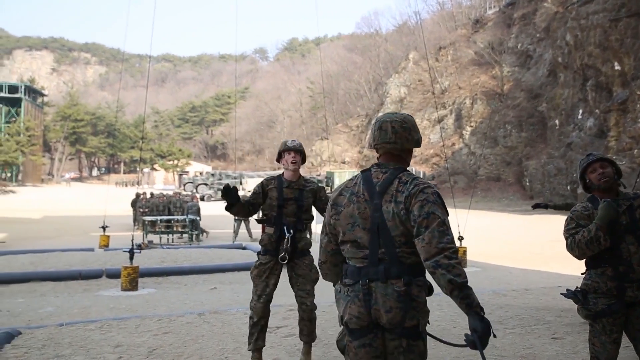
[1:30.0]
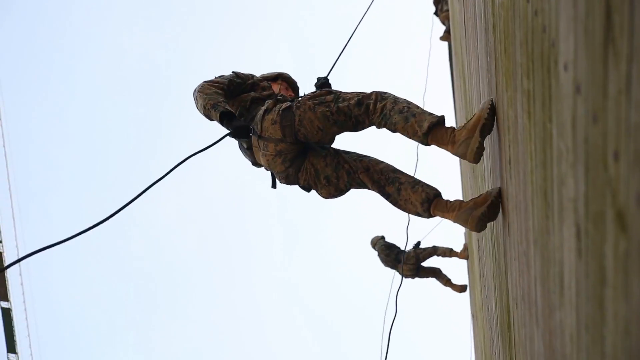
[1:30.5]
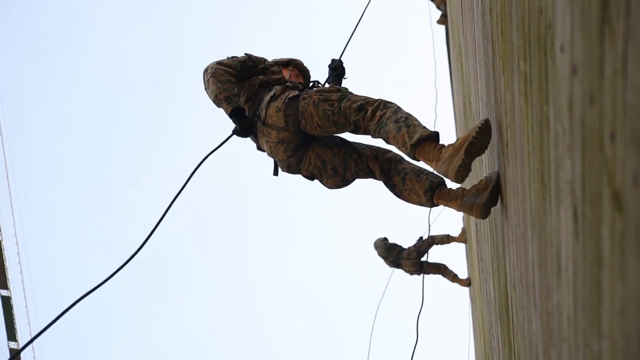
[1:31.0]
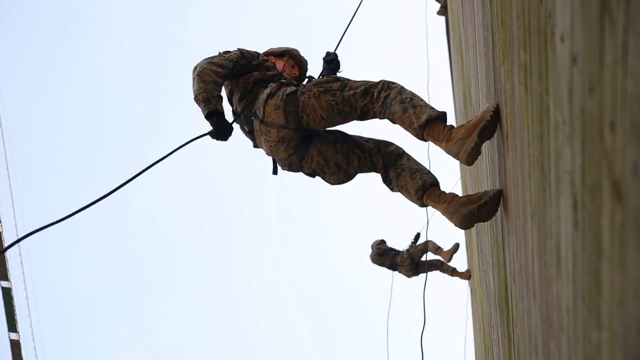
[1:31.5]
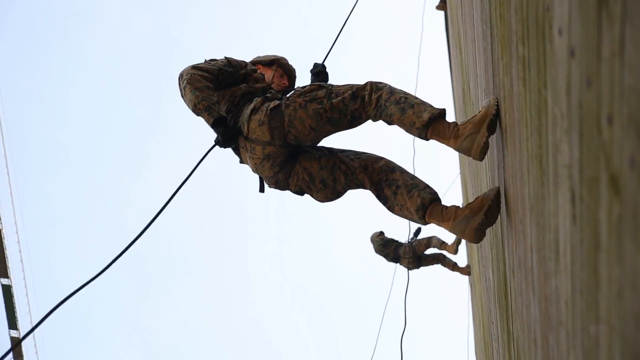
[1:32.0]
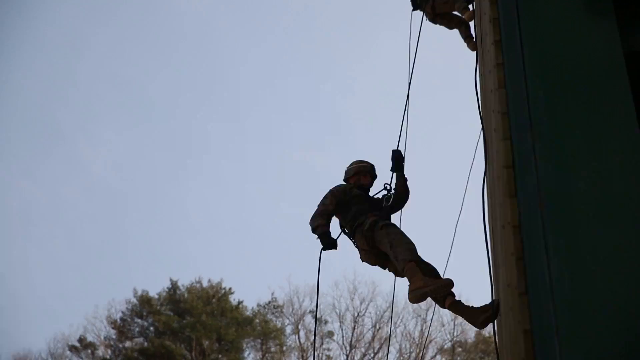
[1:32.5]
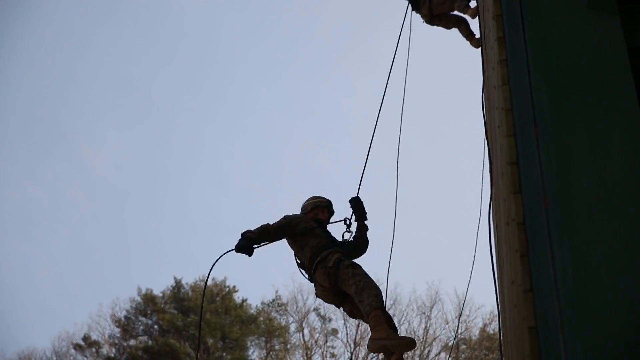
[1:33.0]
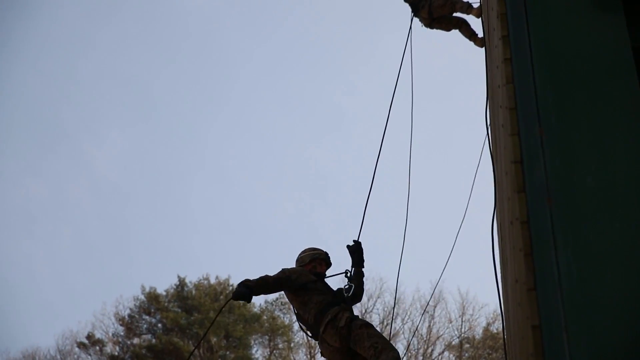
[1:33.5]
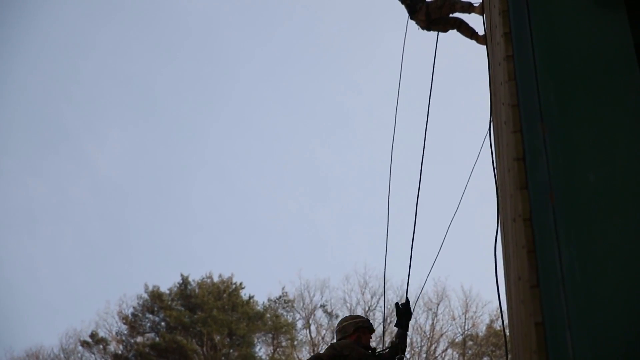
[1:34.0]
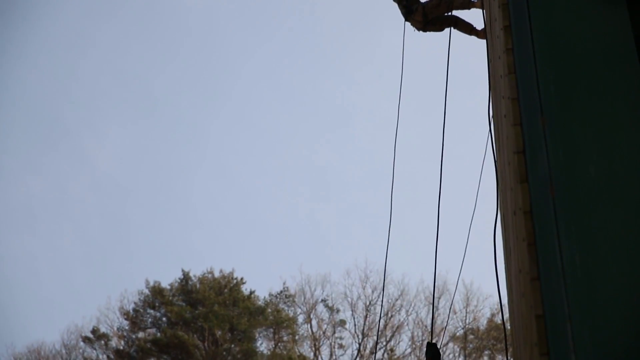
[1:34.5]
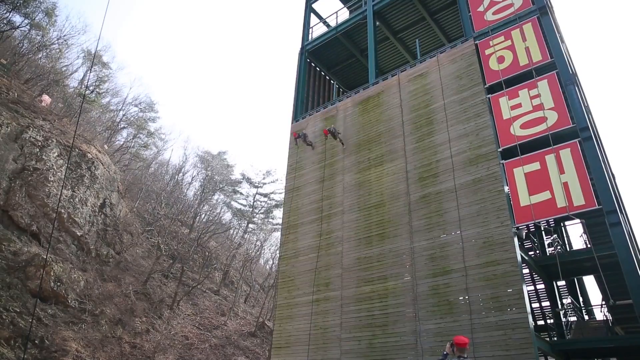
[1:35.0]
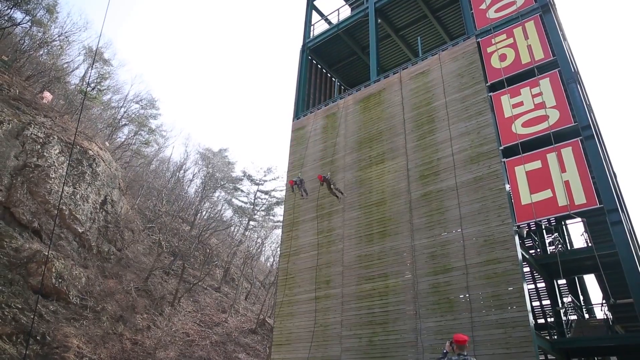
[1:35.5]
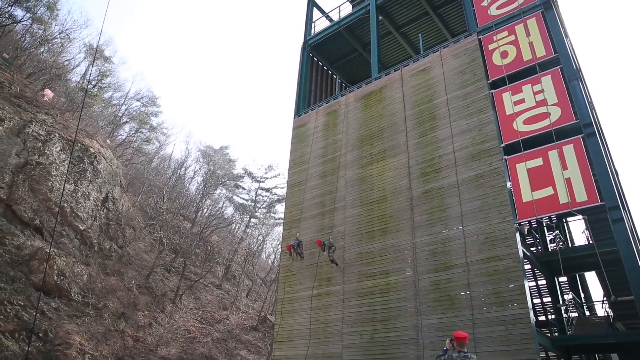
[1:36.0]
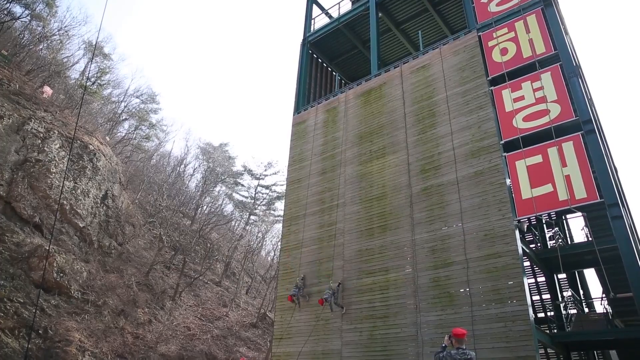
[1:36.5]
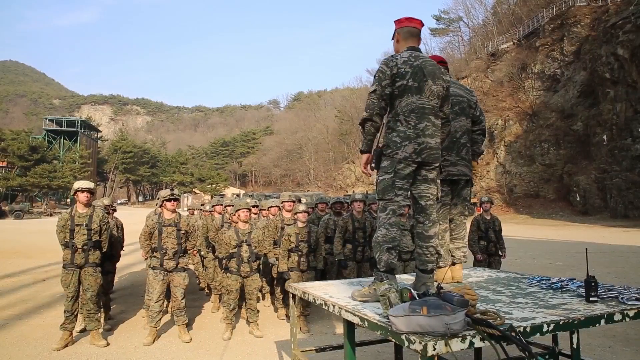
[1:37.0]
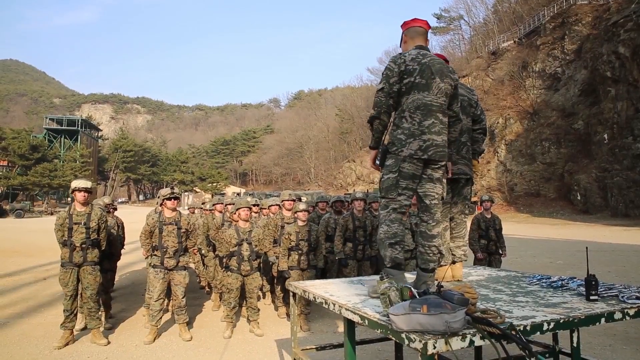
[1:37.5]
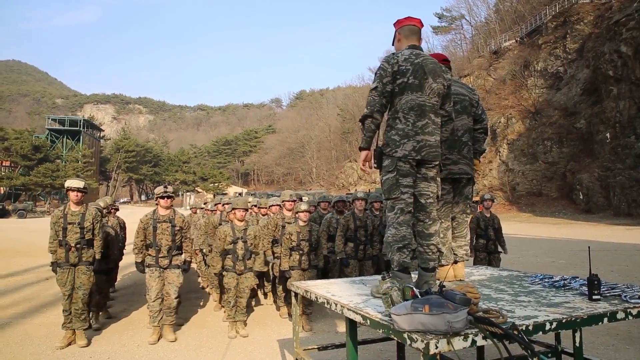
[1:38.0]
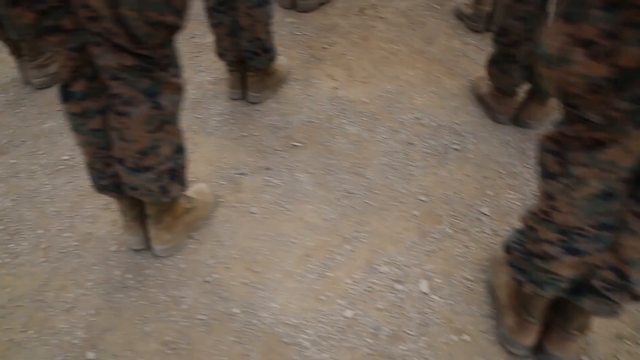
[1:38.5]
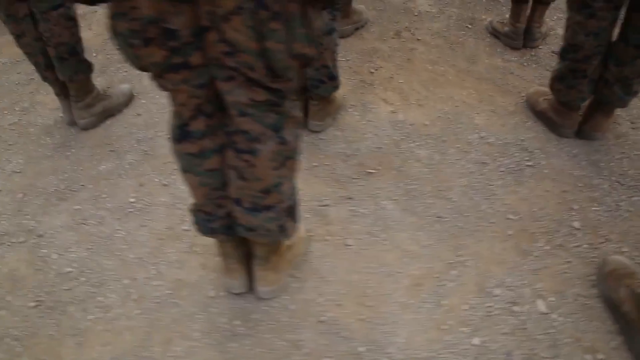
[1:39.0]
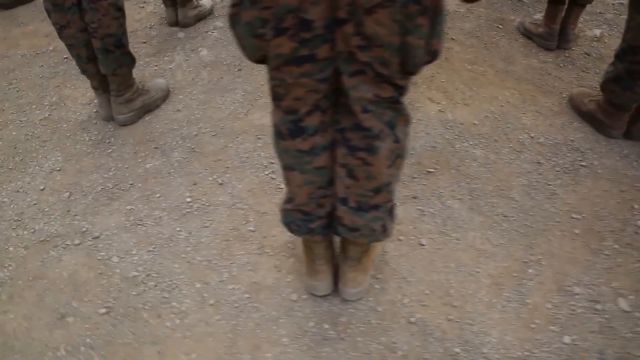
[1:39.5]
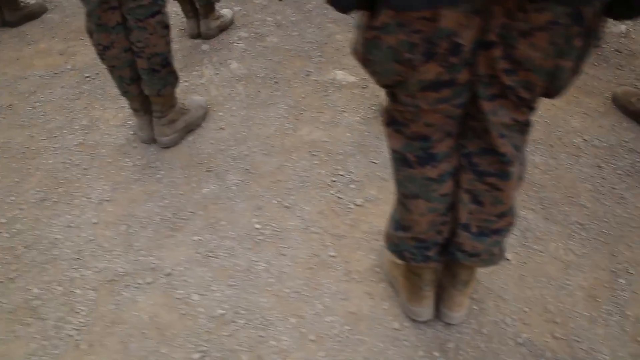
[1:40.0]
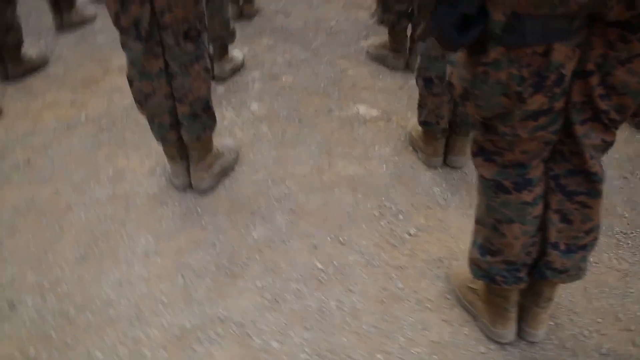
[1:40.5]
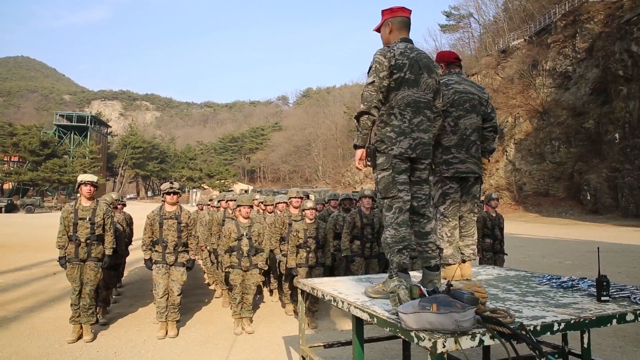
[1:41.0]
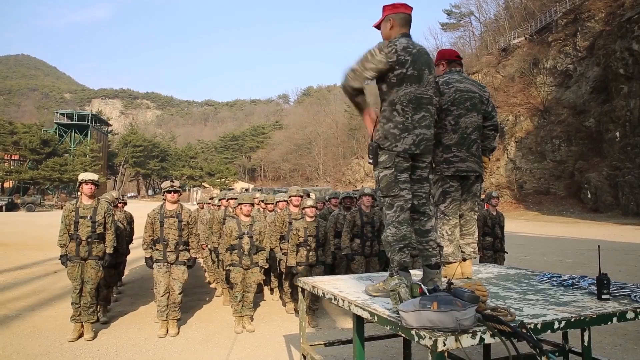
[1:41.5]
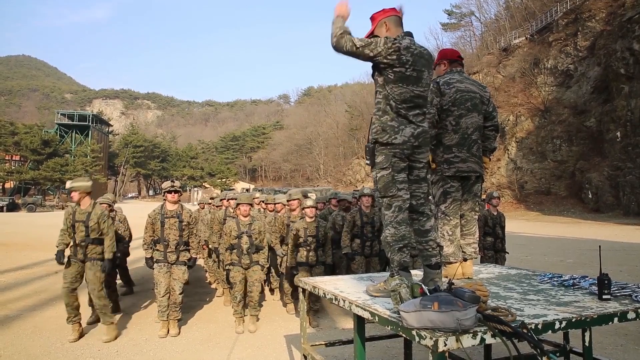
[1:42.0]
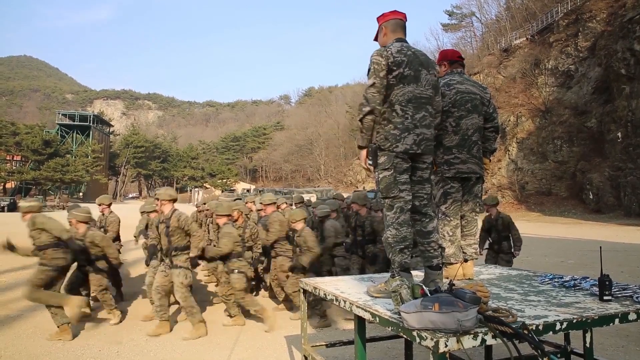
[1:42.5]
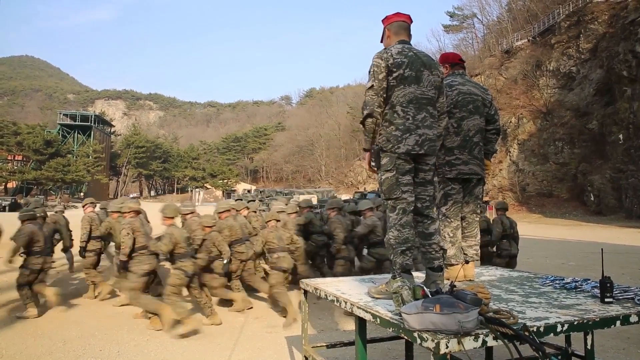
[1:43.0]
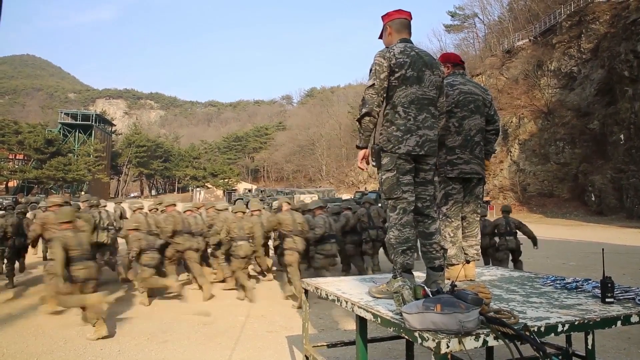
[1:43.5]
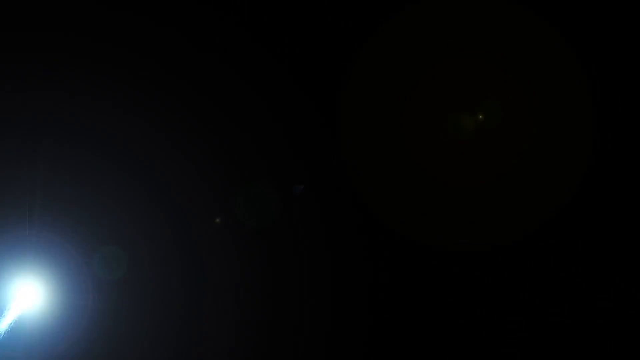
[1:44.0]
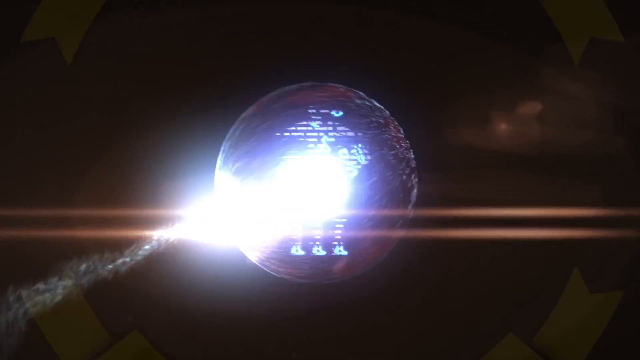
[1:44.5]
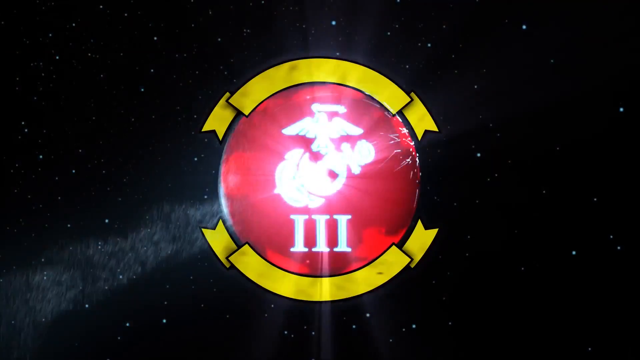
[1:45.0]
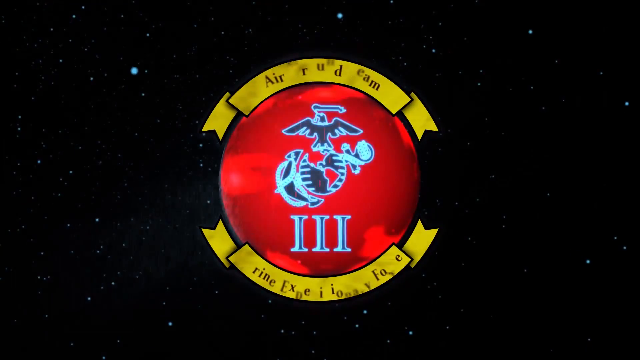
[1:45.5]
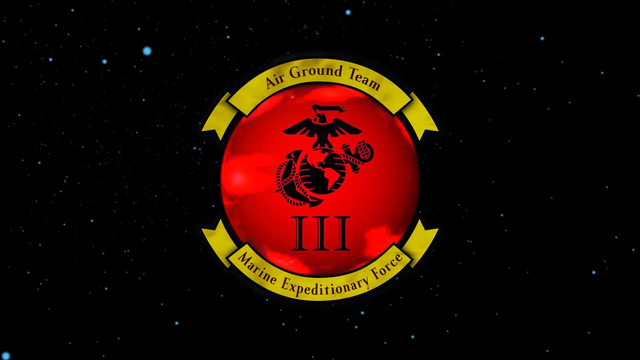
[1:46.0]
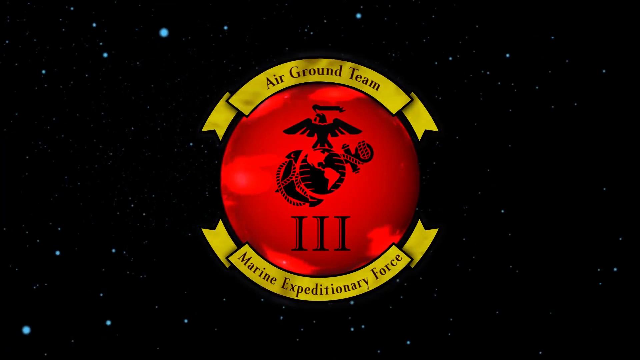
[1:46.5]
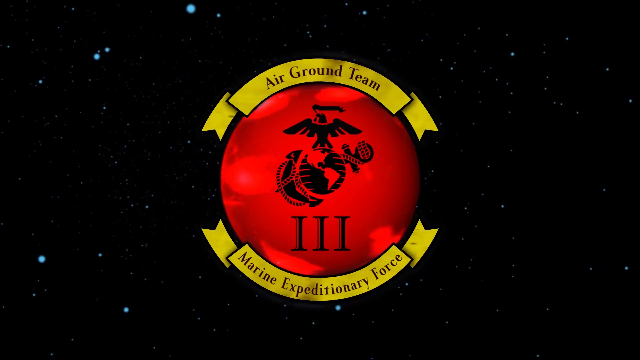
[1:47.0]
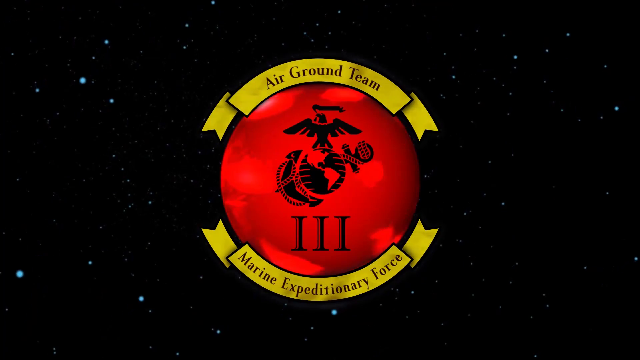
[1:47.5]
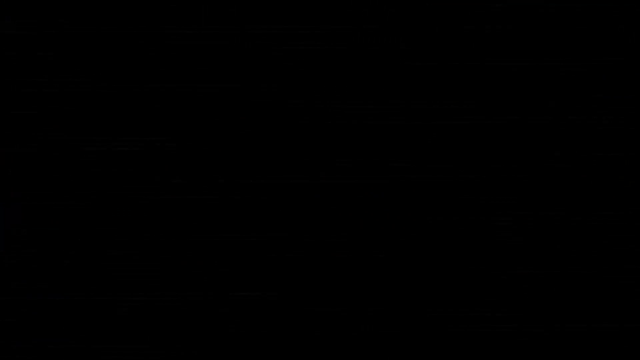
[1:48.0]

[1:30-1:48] More soldiers in camouflage uniforms descend from the tower structure on the parade ground. Two soldiers descend slowly, leaning backwards, attached by rope to the instructor at the top and by rope to the instructor at the bottom. They lean backwards from the wall, walk down it, and take jumps at various intervals. Then two instructors with red hats take a turn on the wall, descending front first very quickly. Next, the two instructors on a raised platform talk to a group of soldiers standing at ease. The soldiers come to attention, placing their feet and boots together, and are then dismissed and run away. The screen then shows a night sky with a firework and the logo of the Air Ground Team and the Marine Expeditionary Force in yellow ribbons, which surround a red sphere with the angel and anchor symbol in black.